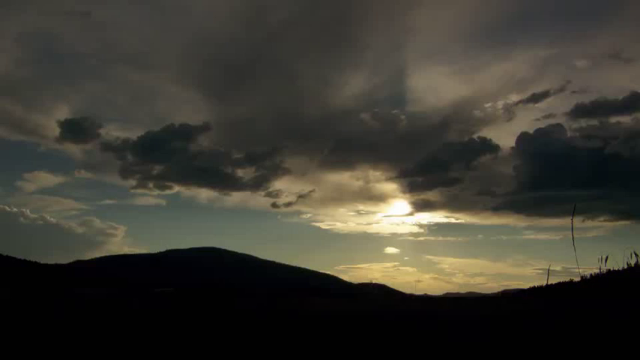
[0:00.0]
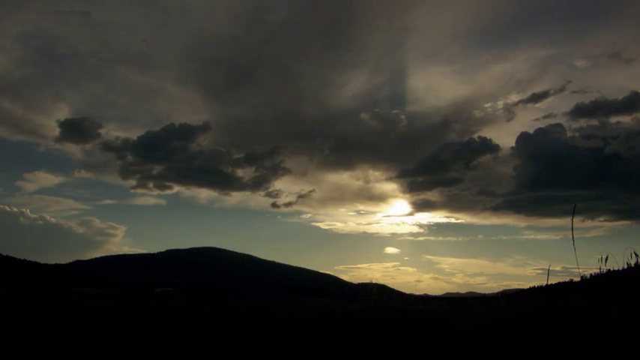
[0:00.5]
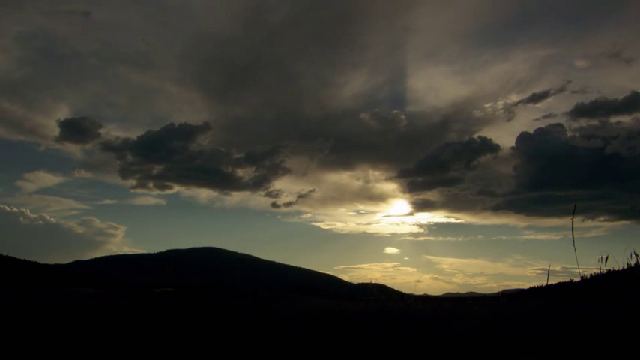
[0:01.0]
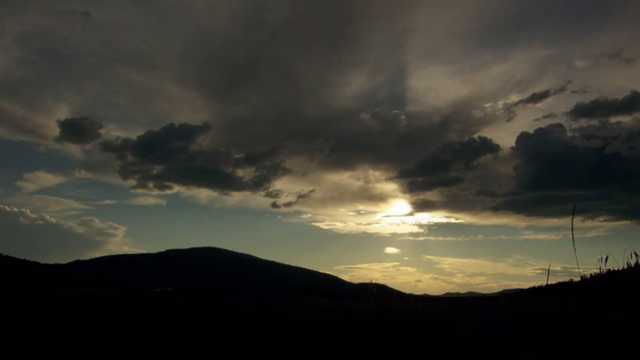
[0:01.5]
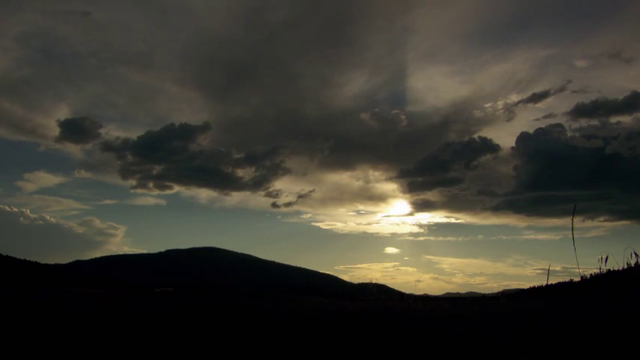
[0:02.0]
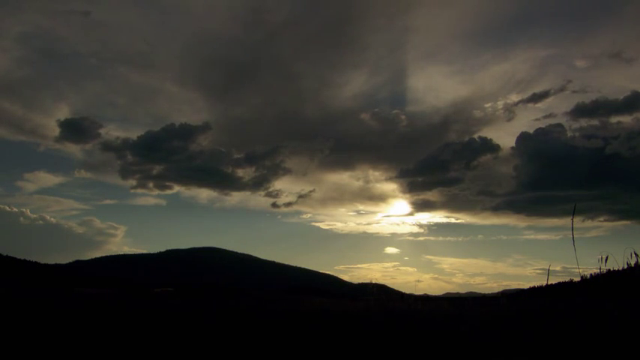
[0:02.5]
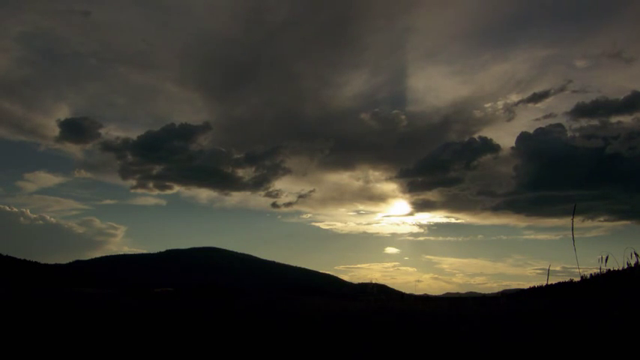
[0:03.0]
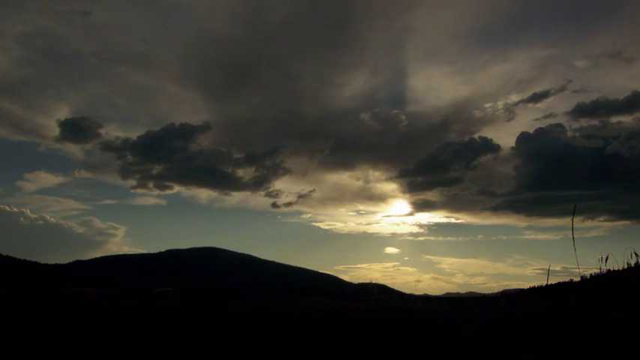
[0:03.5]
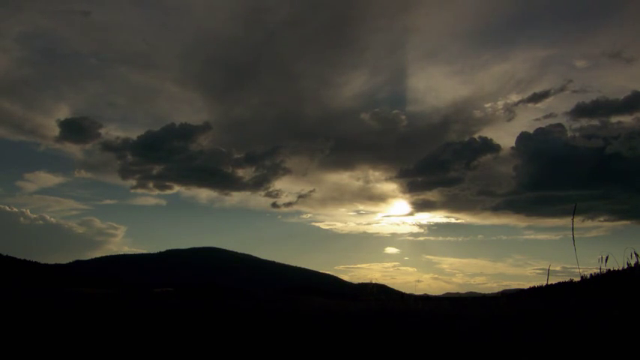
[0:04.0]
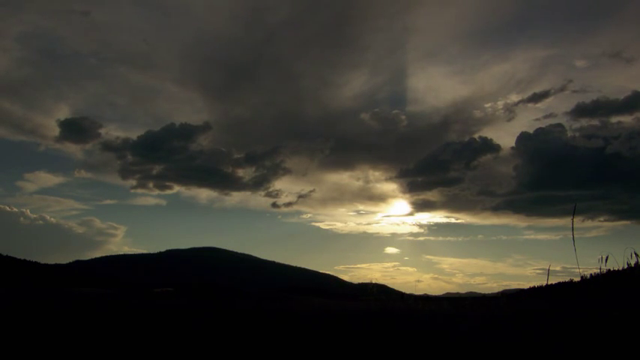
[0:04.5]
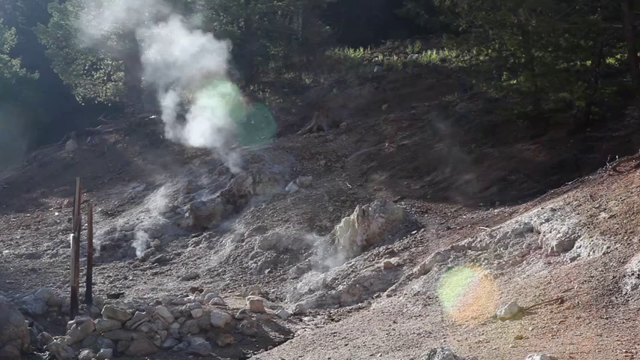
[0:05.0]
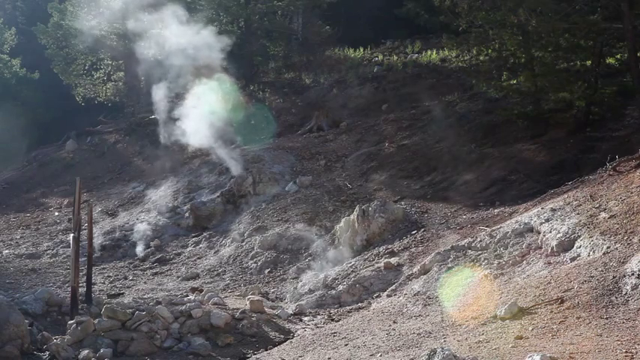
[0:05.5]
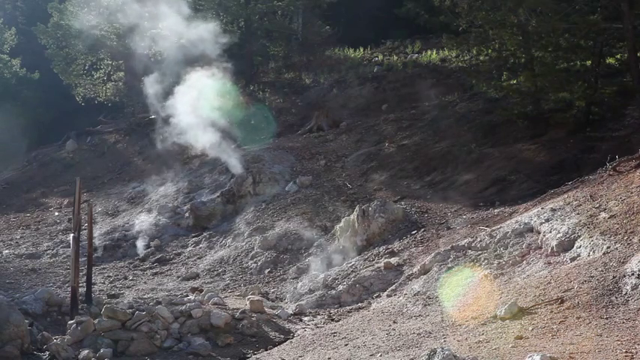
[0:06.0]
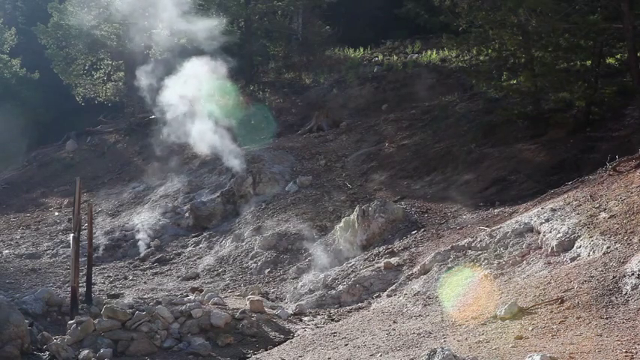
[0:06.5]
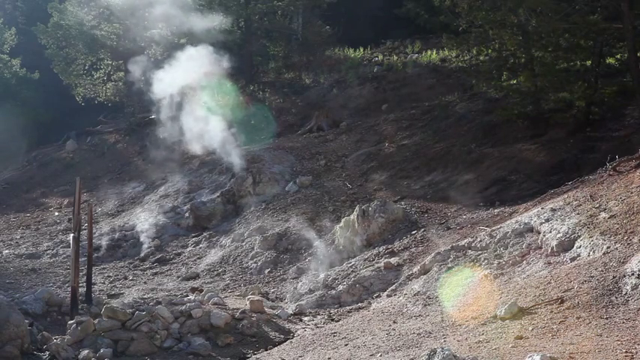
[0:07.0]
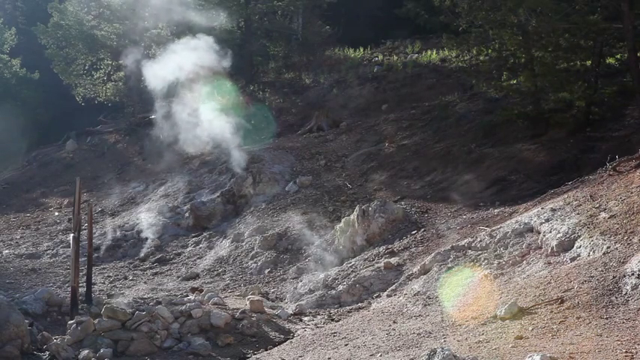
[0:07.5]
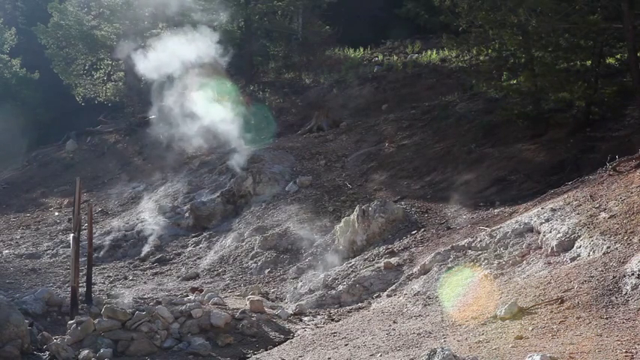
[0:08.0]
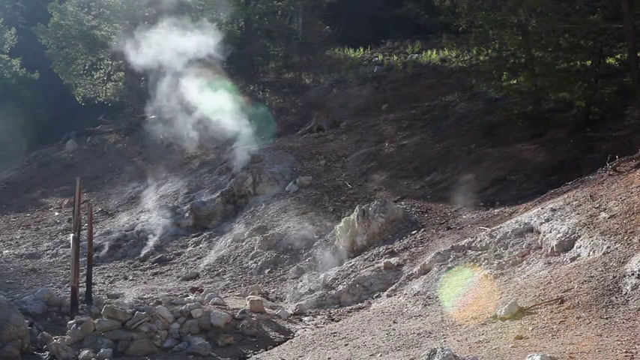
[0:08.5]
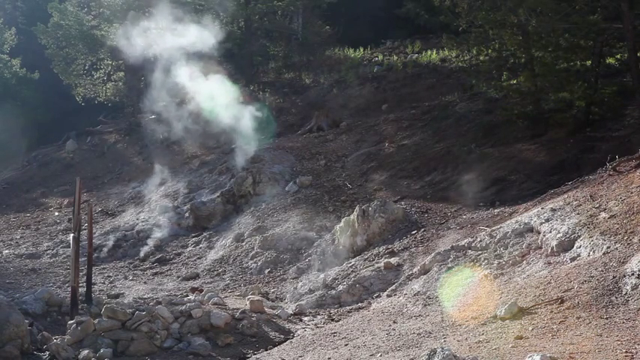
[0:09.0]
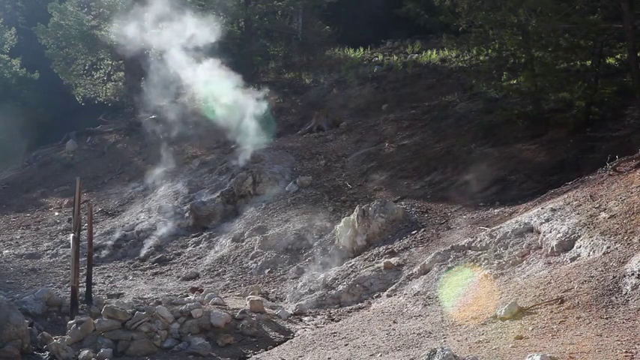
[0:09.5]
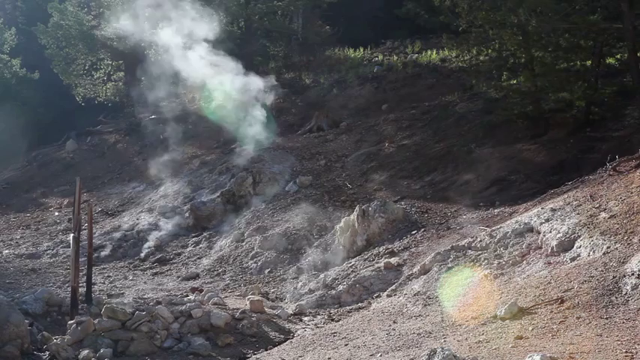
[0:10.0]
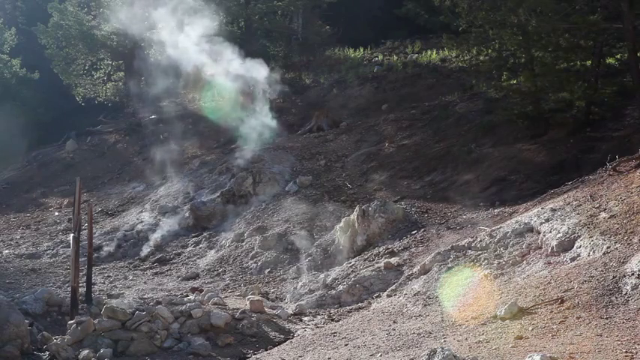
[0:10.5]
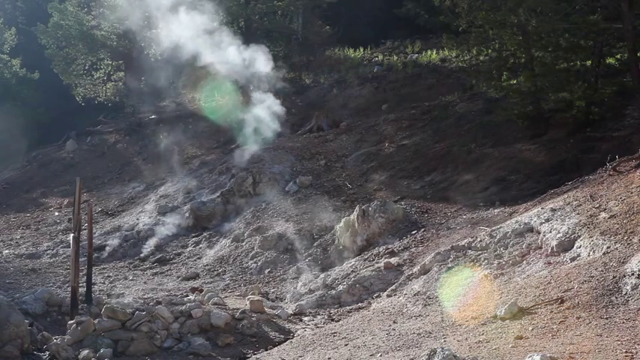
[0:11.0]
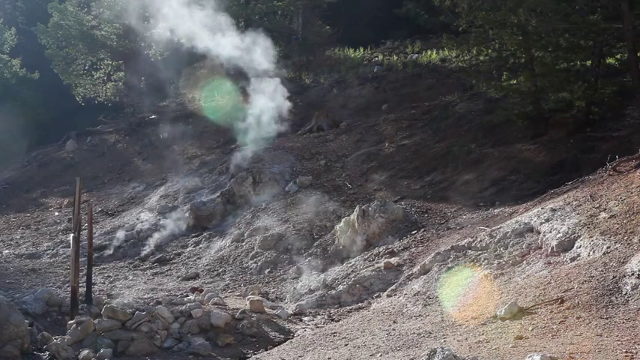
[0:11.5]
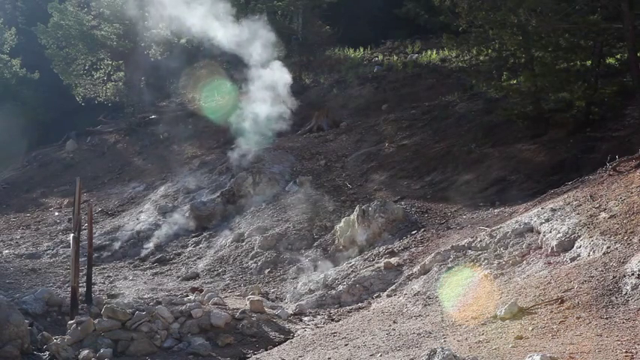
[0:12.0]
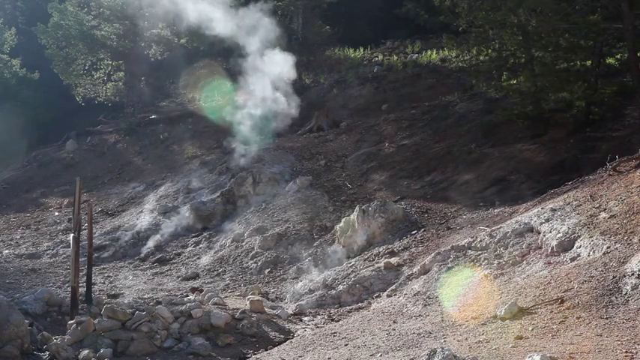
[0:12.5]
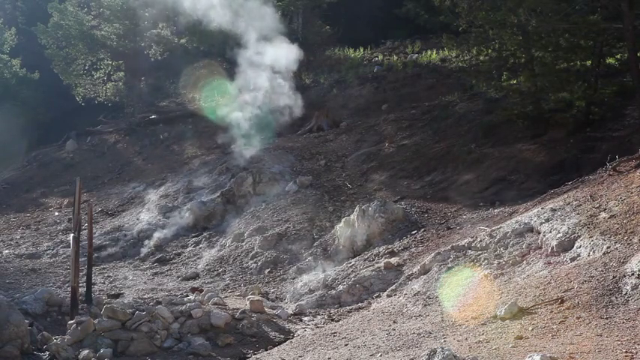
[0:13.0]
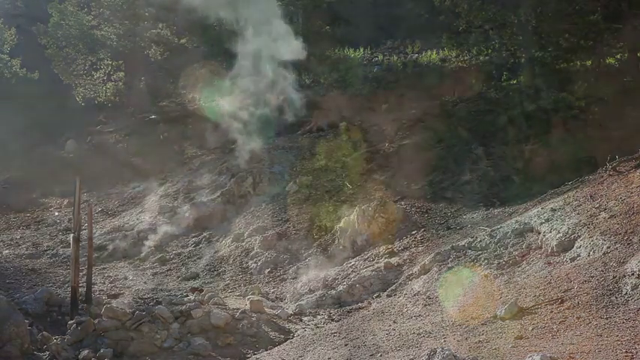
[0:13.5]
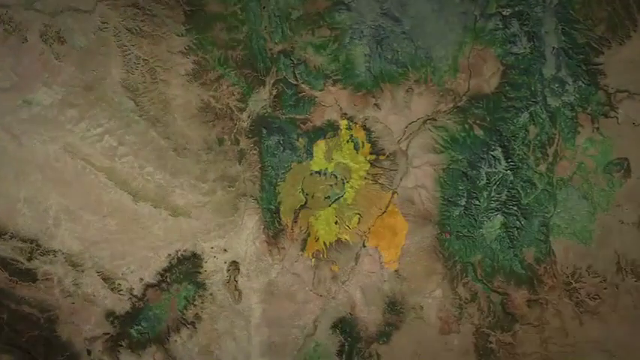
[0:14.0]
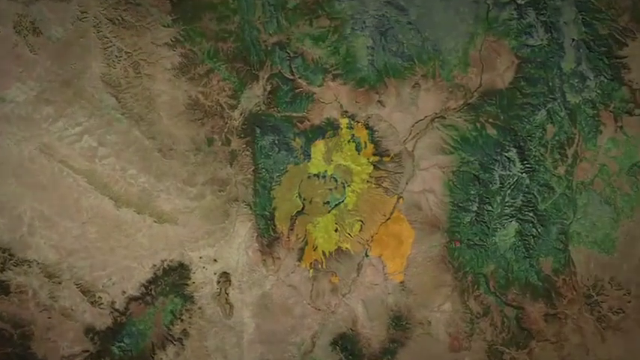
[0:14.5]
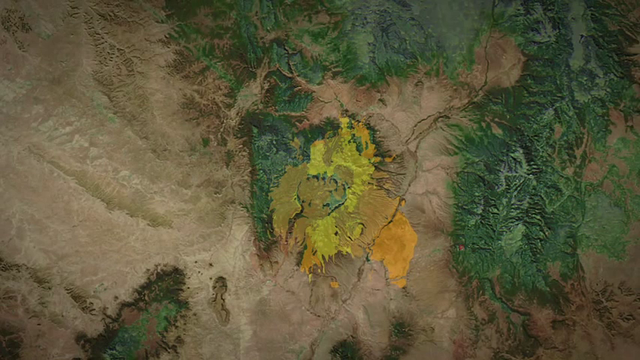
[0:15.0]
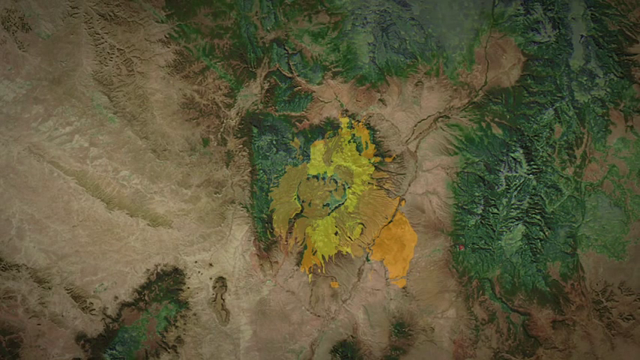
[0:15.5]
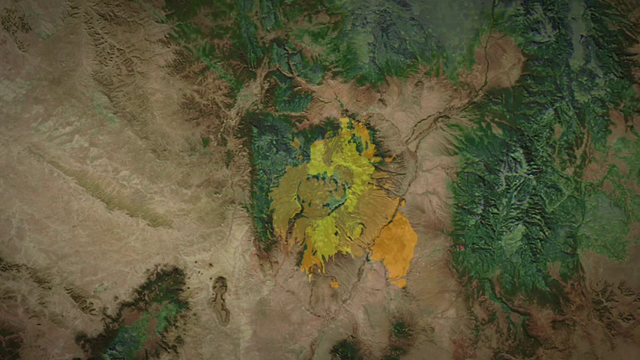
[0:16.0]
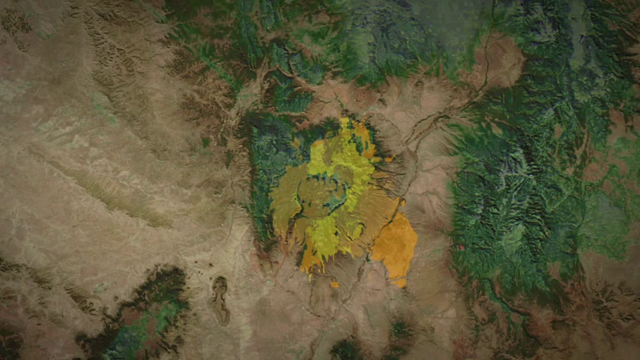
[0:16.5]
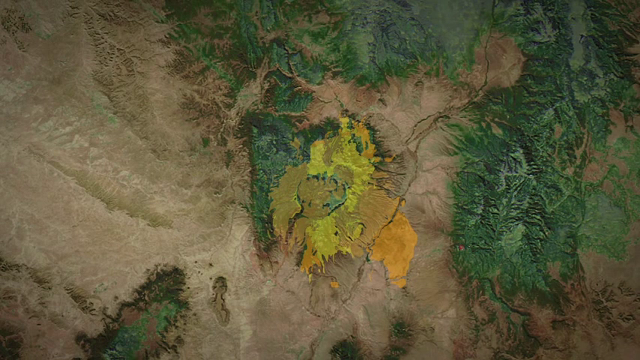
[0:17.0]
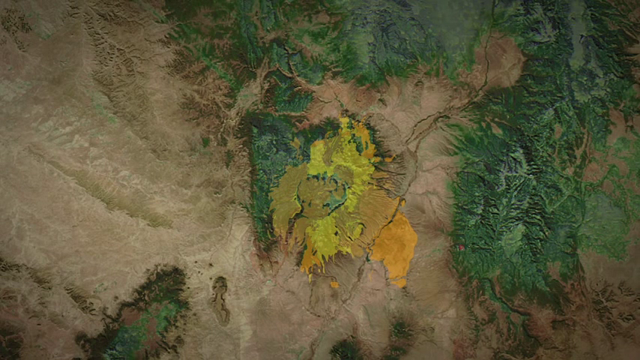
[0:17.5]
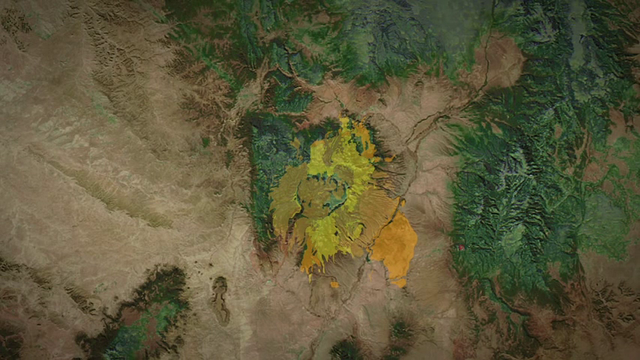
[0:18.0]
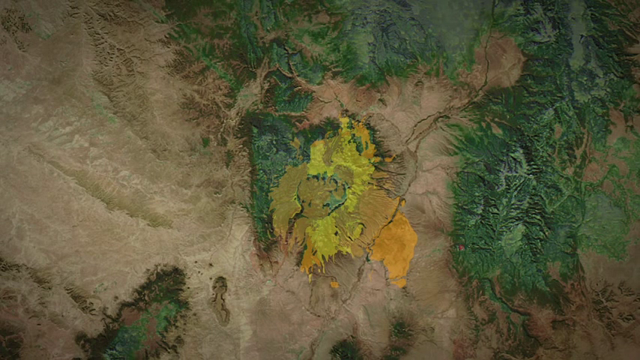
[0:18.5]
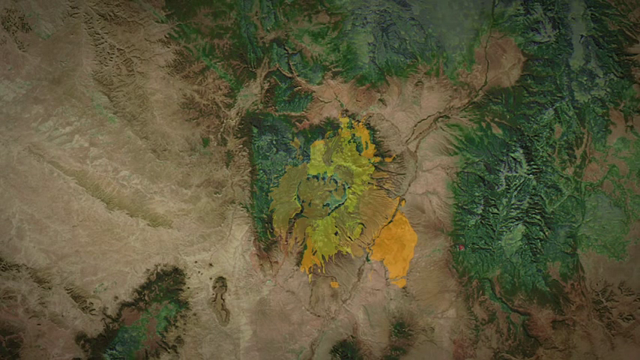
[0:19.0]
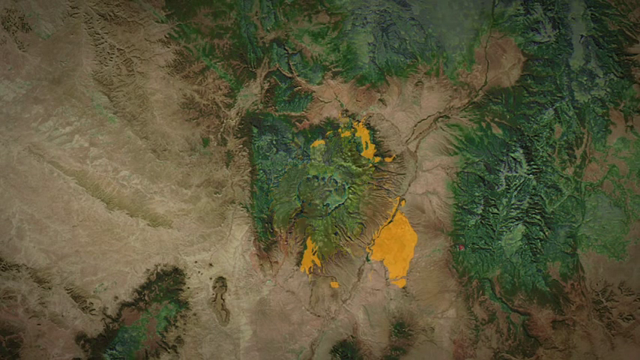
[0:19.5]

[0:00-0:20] Large, very slow clouds drift with the sun setting. In the opening shot the sun comes through the large clouds, and a large mountain at the bottom of the frame is completely in shadow, looking like a silhouette of mountains; the shot stays on this for some time. It then cuts to a rocky area with smoke coming out of the ground. Two sticks are stuck in the ground where the rocks are, steam comes out of the ground, and trees are in the background. Next comes a 3D image of a map showing green land, brown land and orange land; the map seems to show the very specific location of these rocks and the steam coming out of the ground.